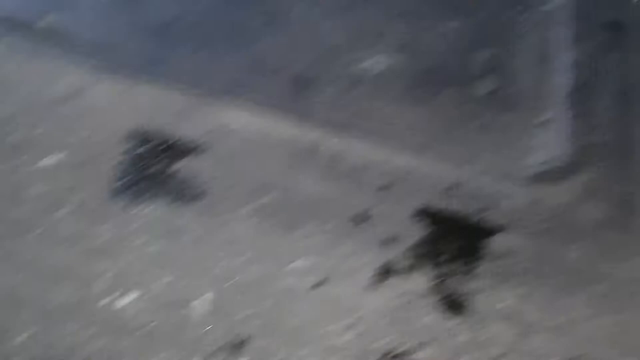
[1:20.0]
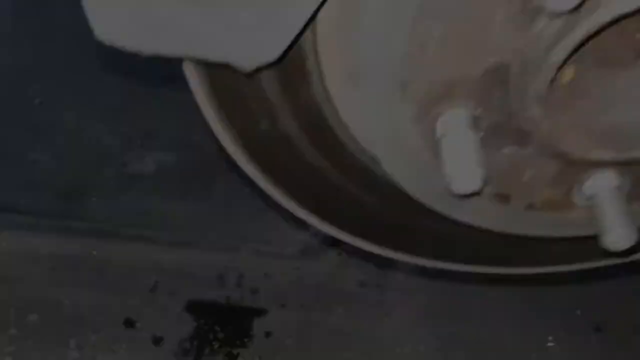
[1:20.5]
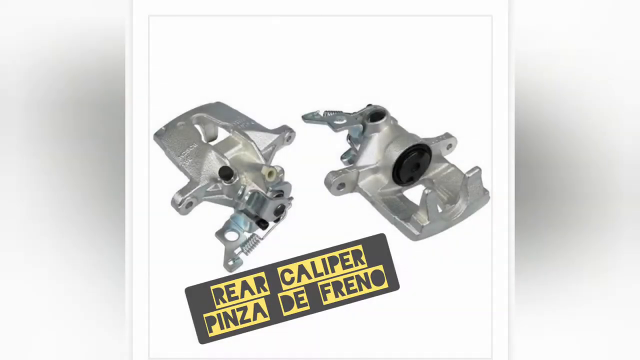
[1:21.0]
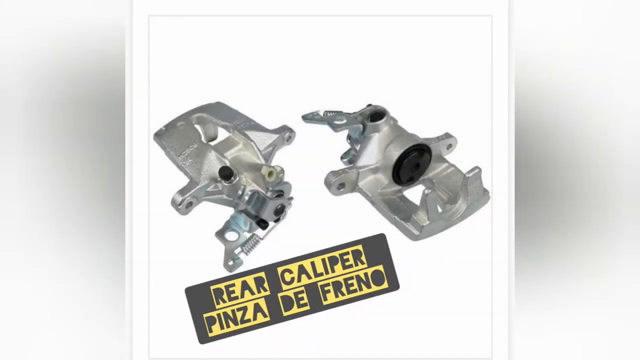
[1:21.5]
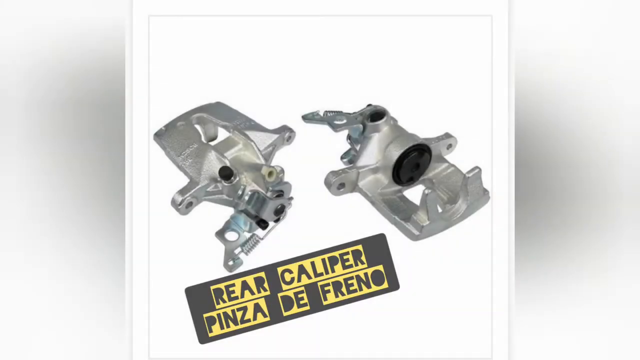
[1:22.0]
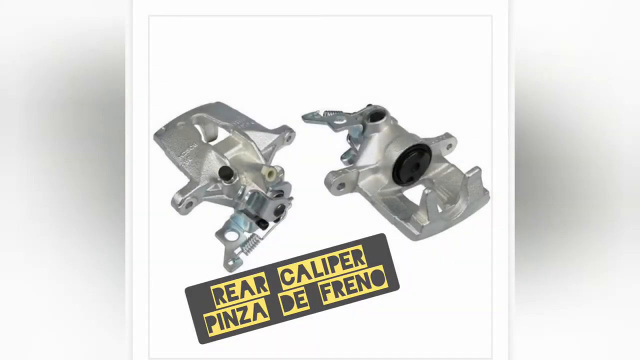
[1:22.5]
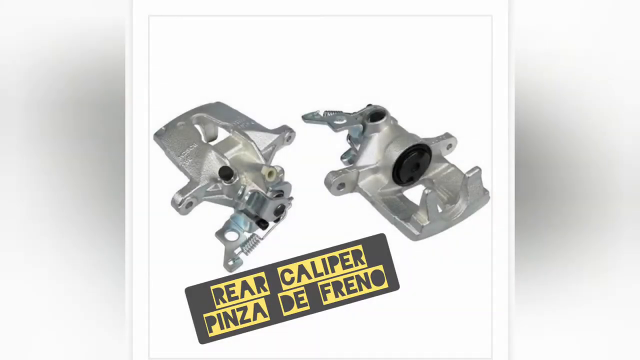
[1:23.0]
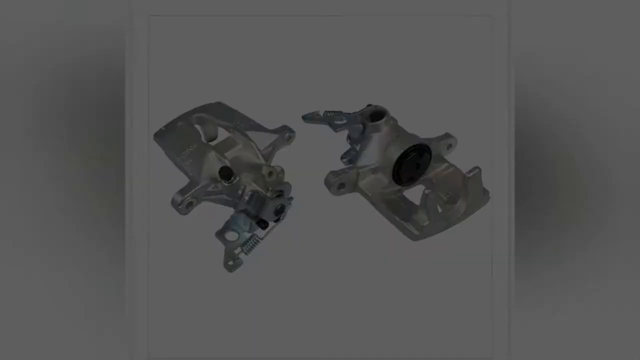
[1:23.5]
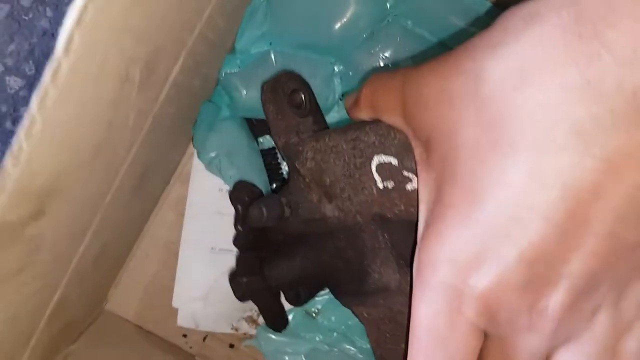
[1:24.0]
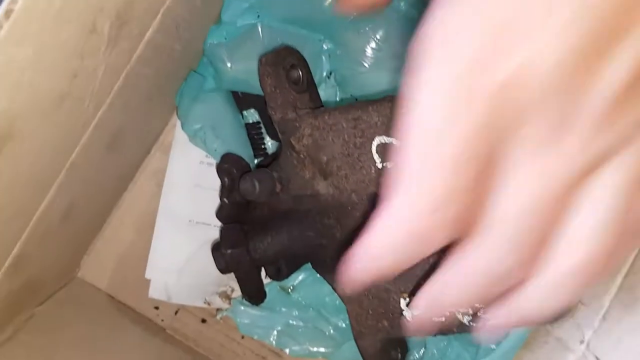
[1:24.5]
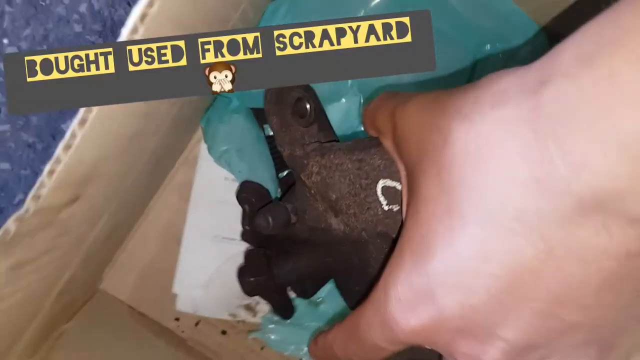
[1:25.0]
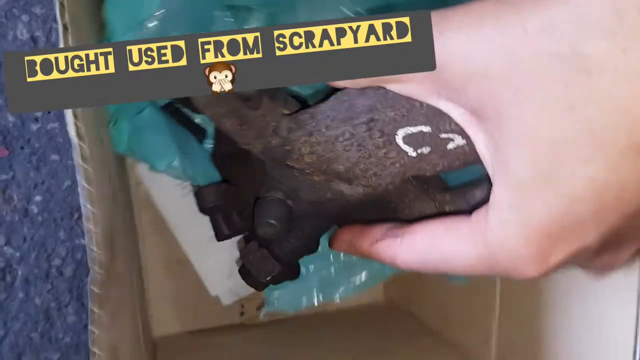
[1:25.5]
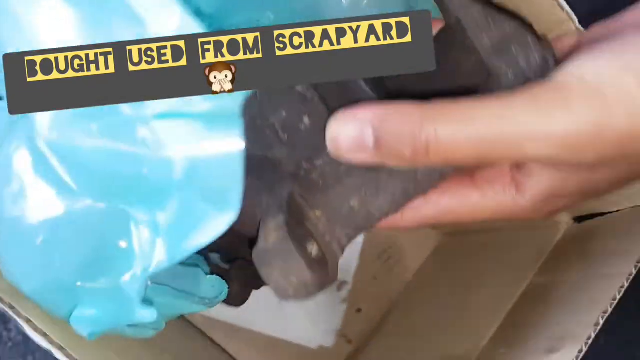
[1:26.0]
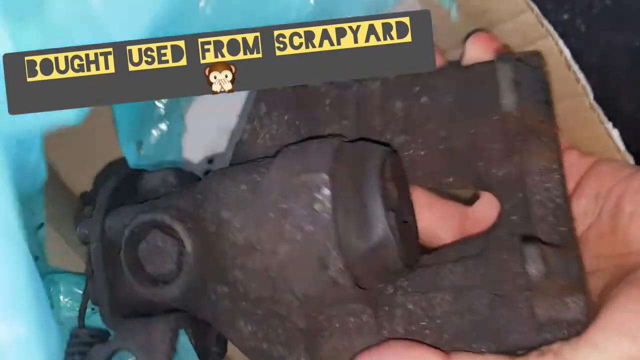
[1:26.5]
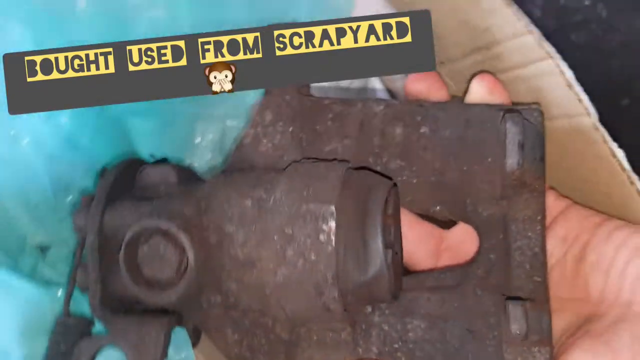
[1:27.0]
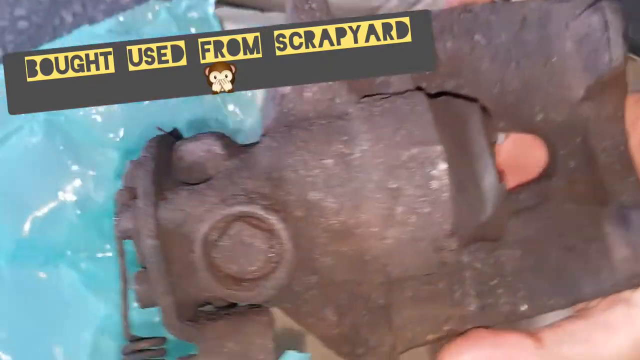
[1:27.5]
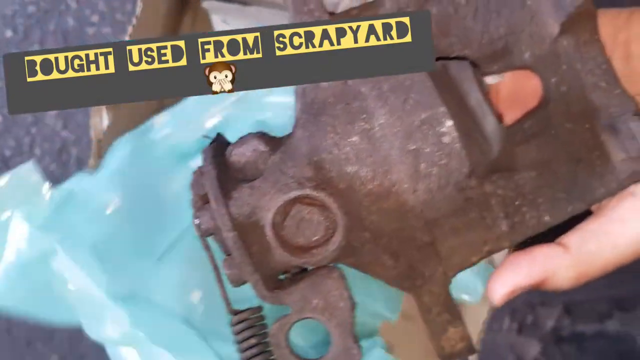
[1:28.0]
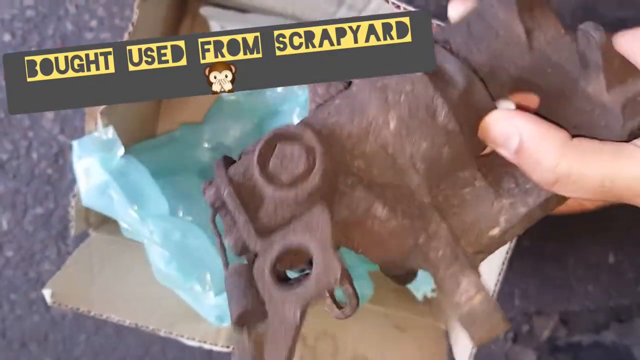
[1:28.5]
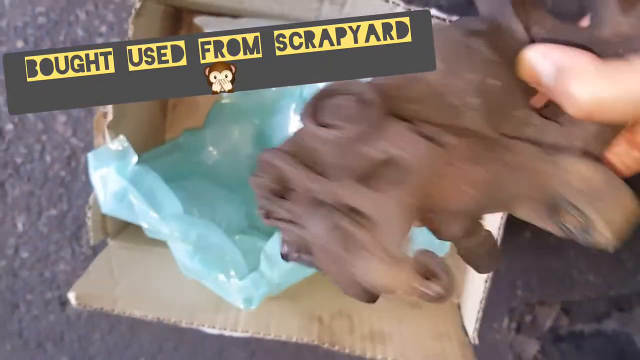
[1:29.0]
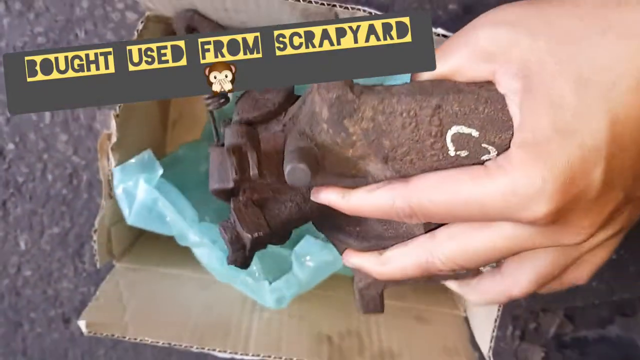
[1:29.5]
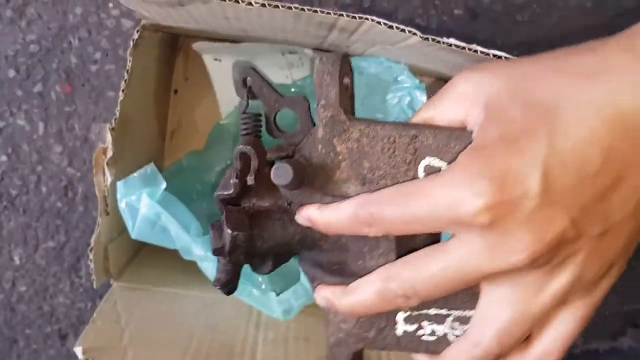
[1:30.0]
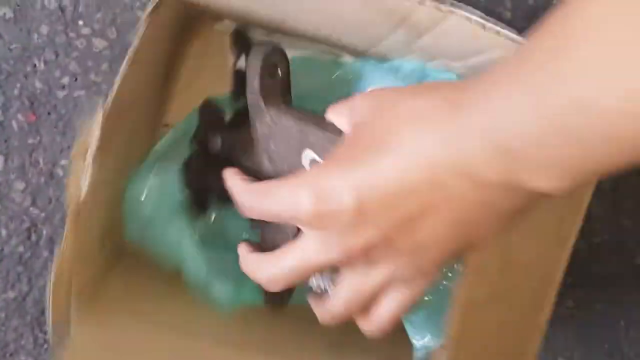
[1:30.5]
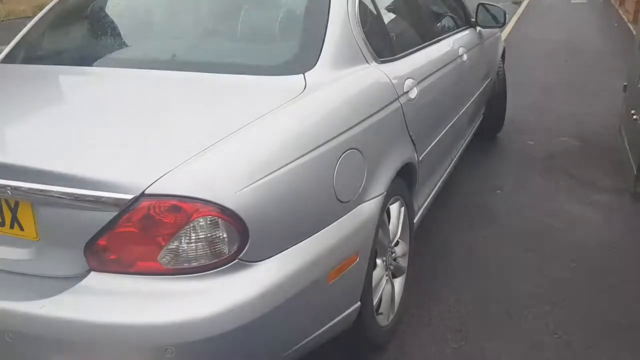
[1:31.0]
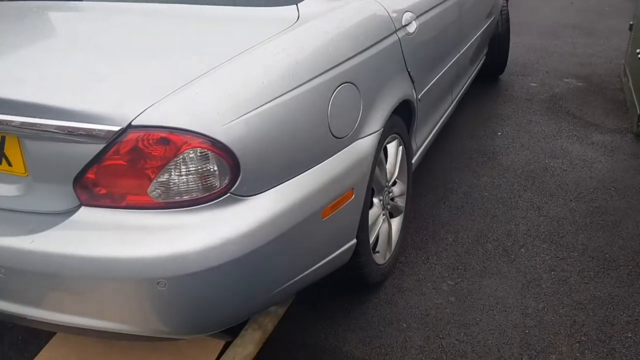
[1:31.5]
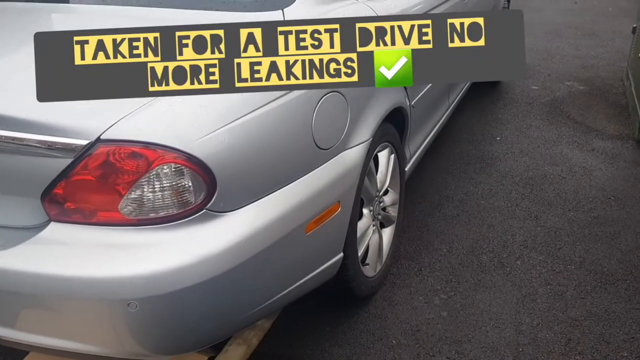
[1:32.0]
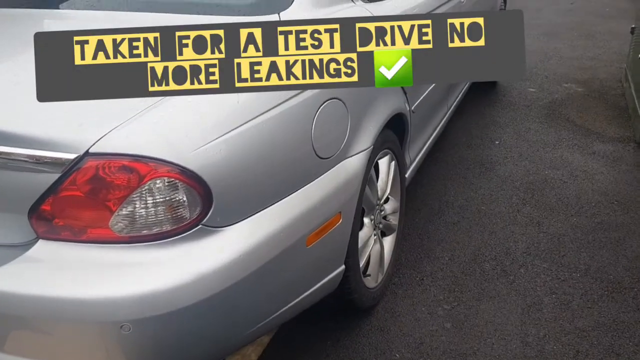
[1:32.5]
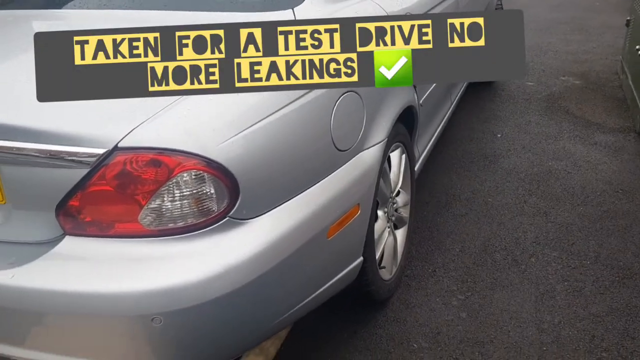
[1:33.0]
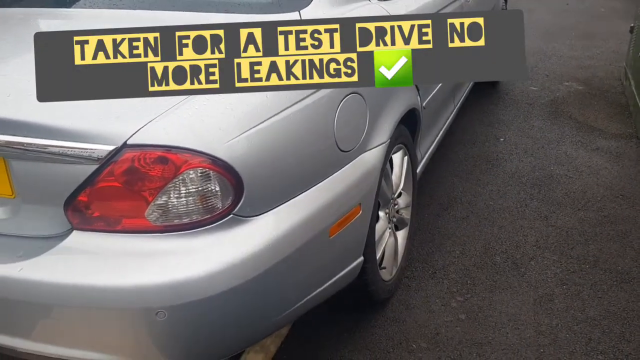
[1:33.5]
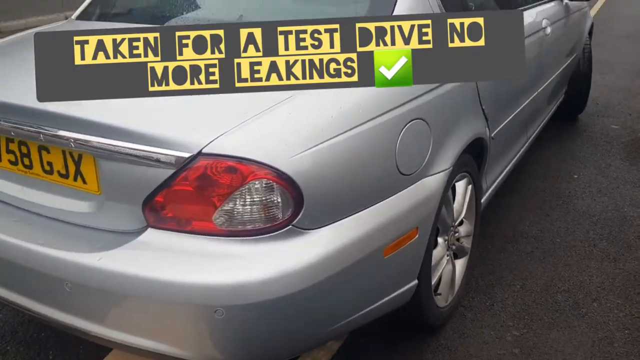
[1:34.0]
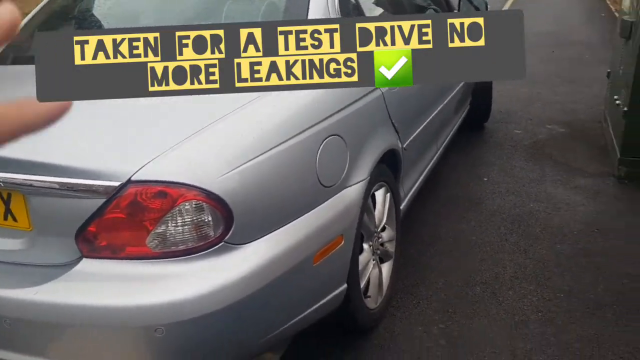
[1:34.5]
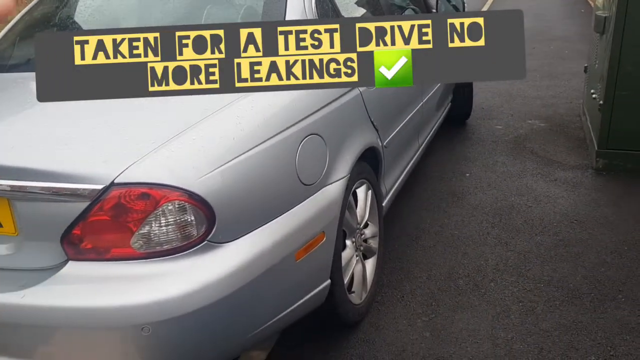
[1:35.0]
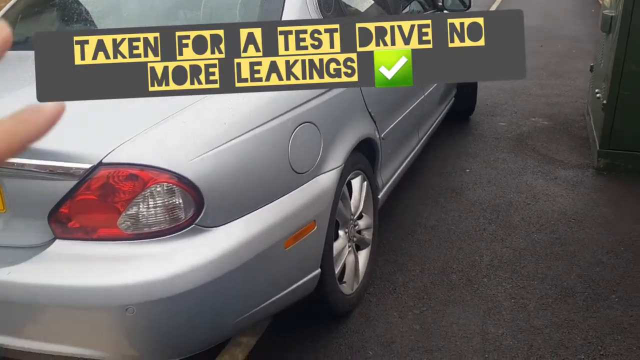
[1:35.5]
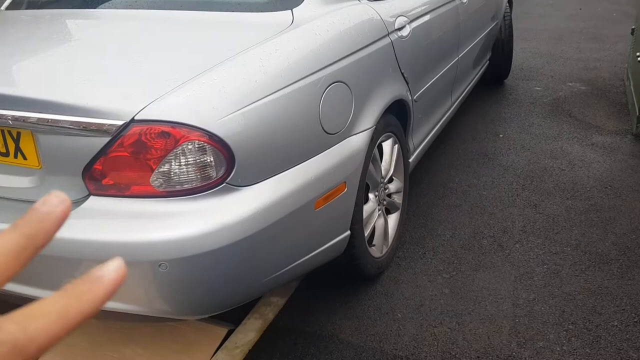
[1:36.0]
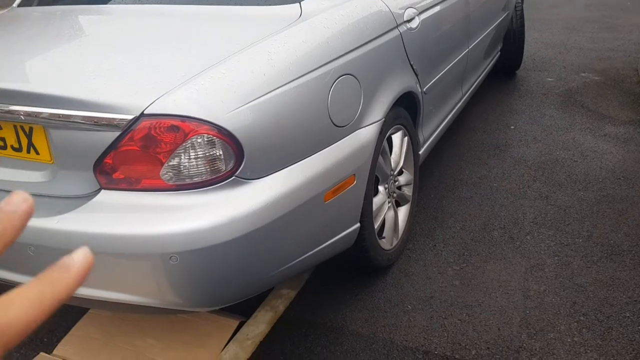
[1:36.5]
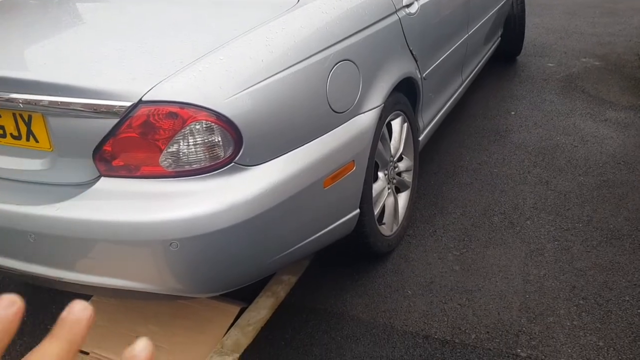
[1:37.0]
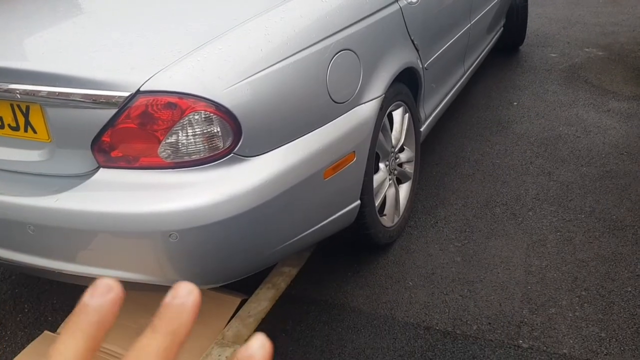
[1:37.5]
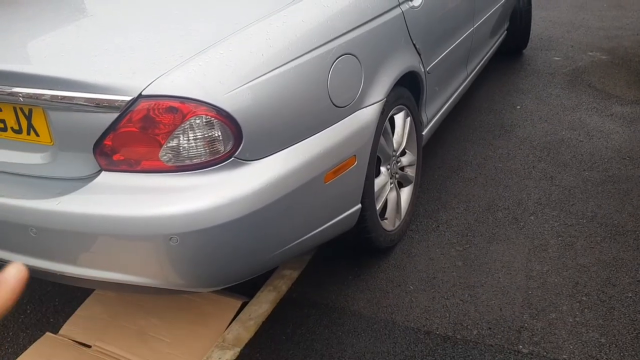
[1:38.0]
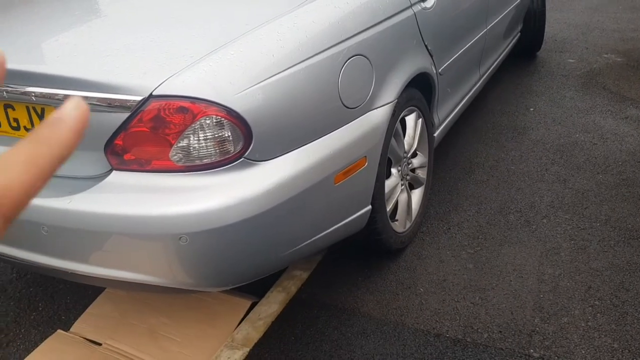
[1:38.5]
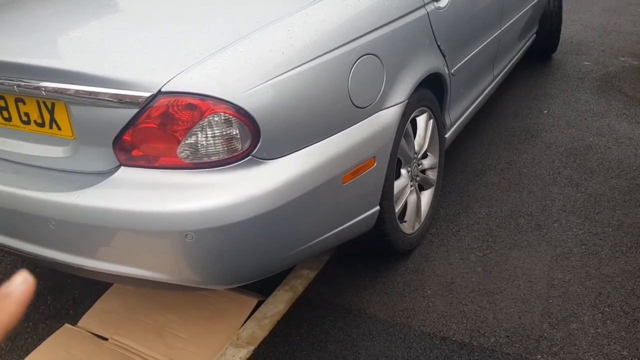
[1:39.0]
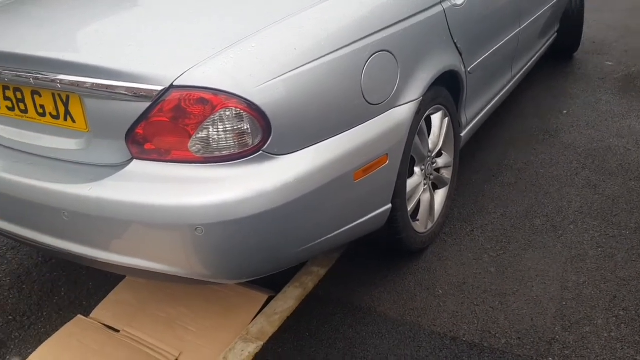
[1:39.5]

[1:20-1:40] The underside of a car where the tire has been removed is shown, then the scene switches. The words "rear caliper pinza de freno" appear at the bottom inside a gray rectangular box with five yellow rectangular boxes in the middle of it, with two colored car parts at the top. The camera then zooms out to a different scene showing a box with a similar-looking part that is very rusted and old. The person's hand lifts it out of the box, which also has turquoise wrapping paper inside. The words "bought used from scrapyard" appear on the top left of the screen with a picture of a monkey. The person puts the part back inside the box. The camera then zooms to a silver car, and the words "taken for a test drive no more leakings" appear at the top left inside a gray box with a green square containing a check mark. The person waves their hand around as if explaining something.